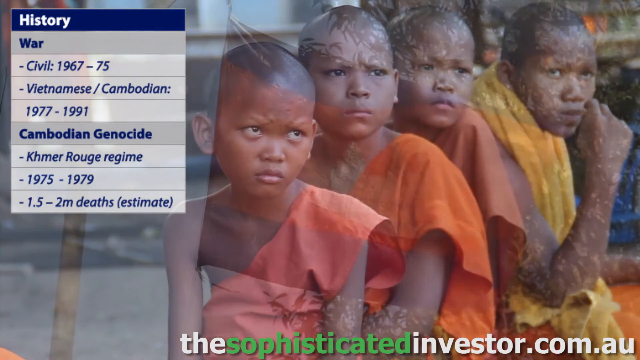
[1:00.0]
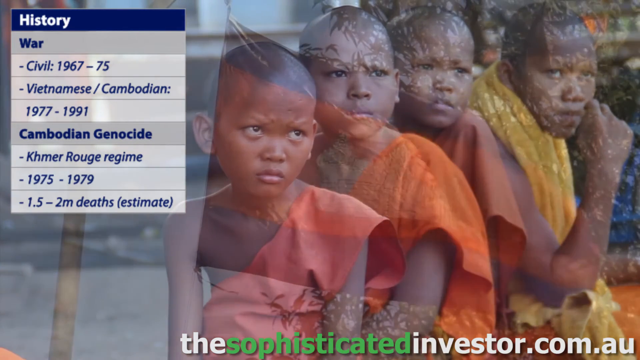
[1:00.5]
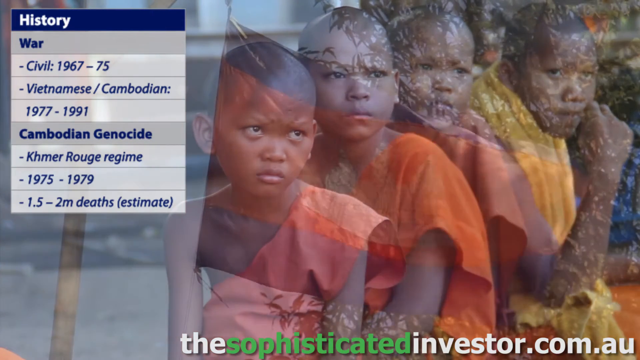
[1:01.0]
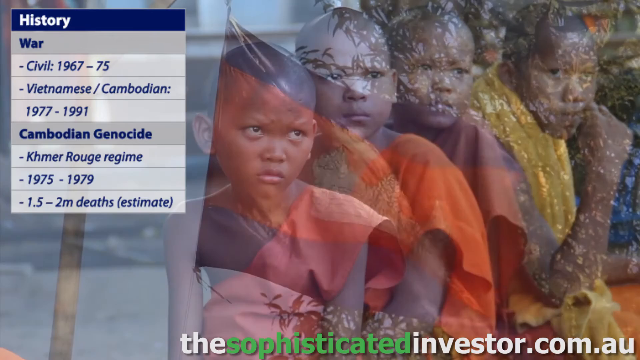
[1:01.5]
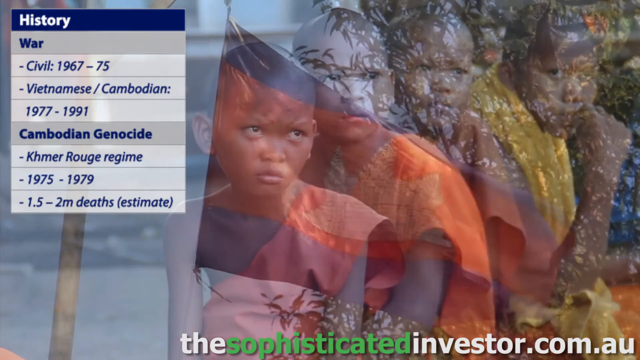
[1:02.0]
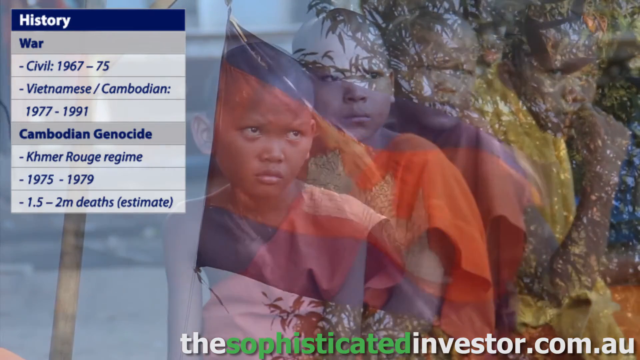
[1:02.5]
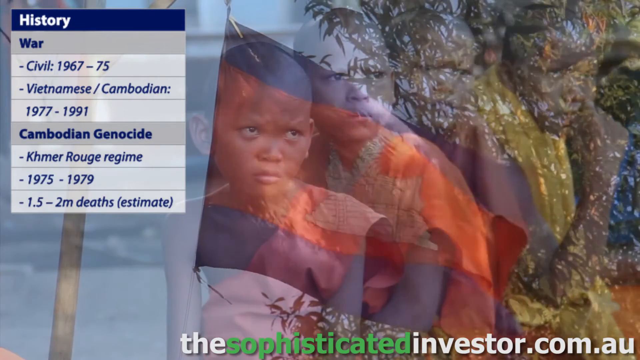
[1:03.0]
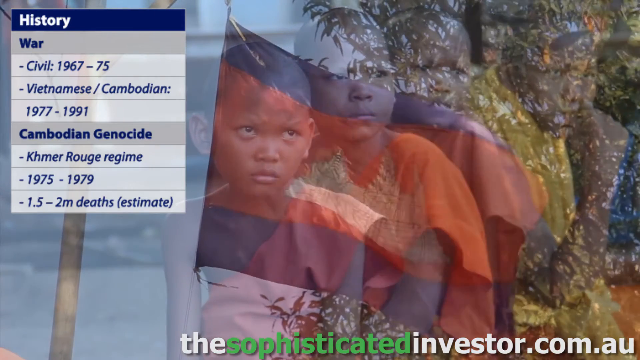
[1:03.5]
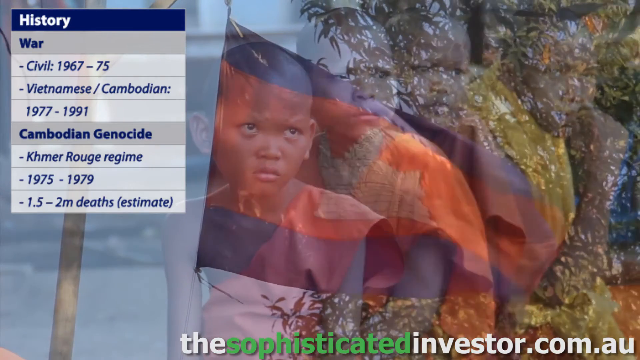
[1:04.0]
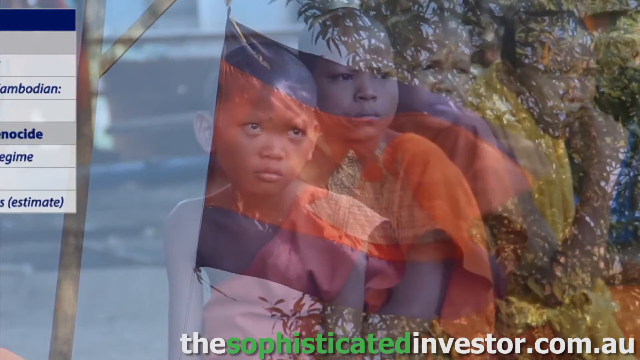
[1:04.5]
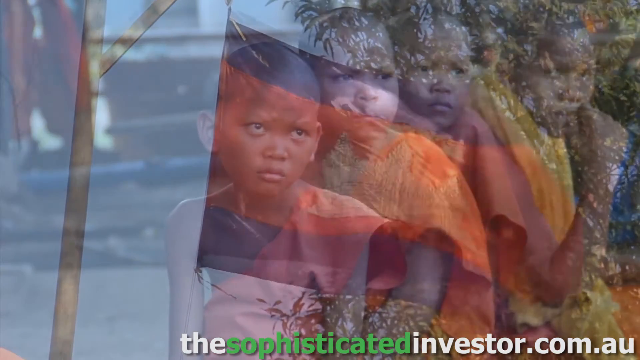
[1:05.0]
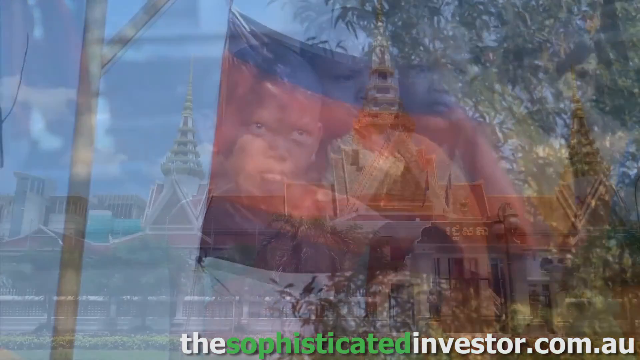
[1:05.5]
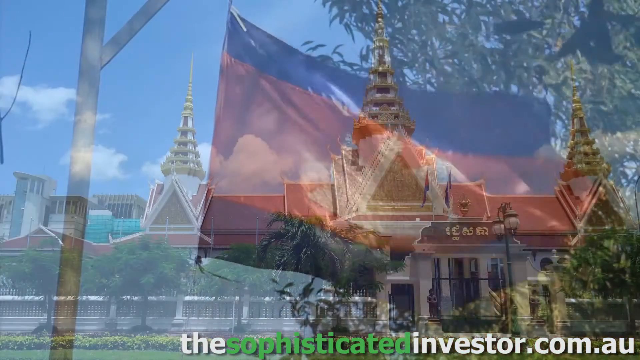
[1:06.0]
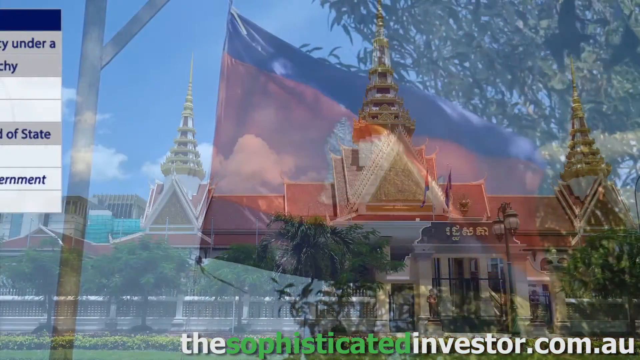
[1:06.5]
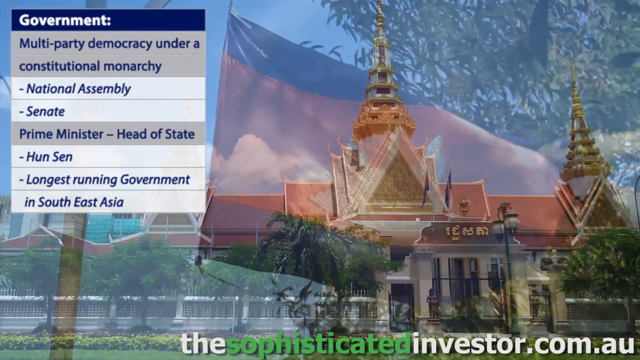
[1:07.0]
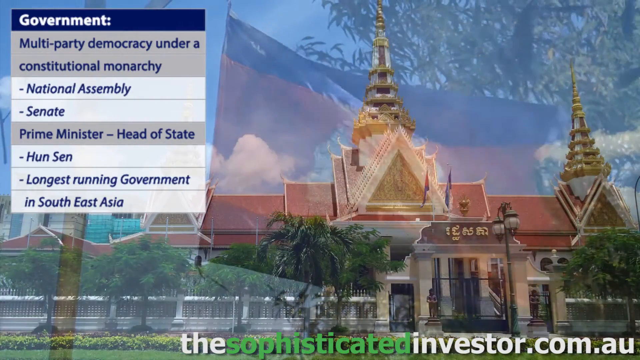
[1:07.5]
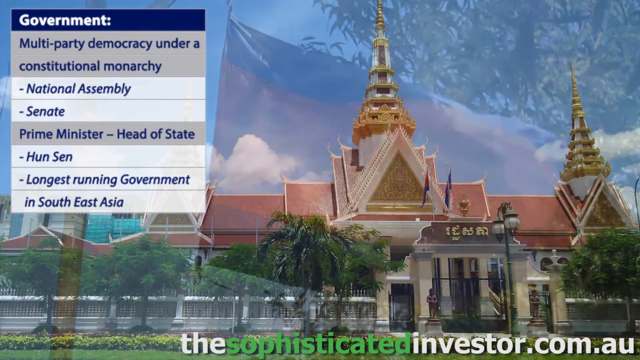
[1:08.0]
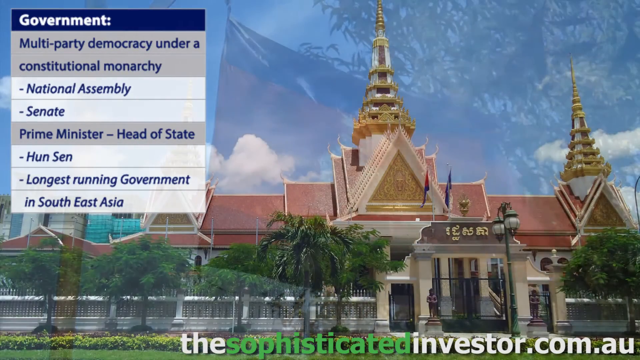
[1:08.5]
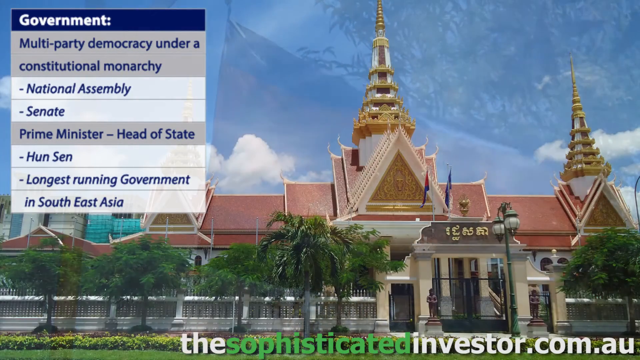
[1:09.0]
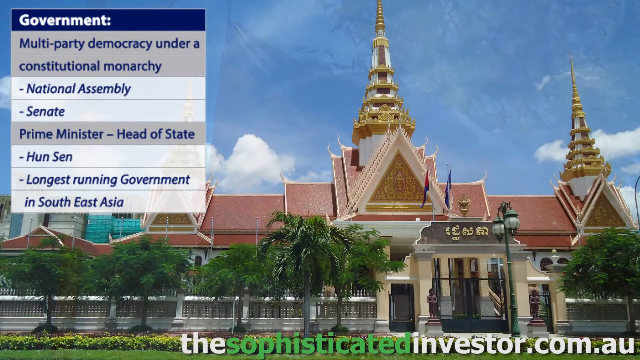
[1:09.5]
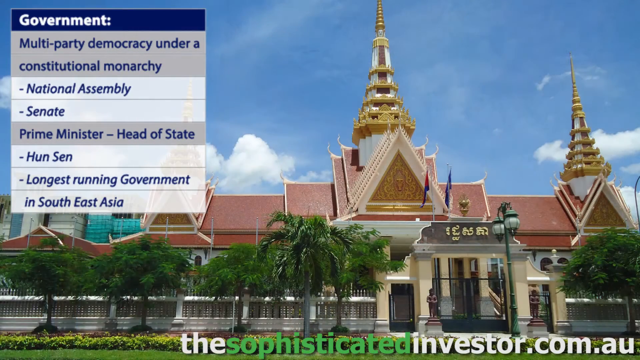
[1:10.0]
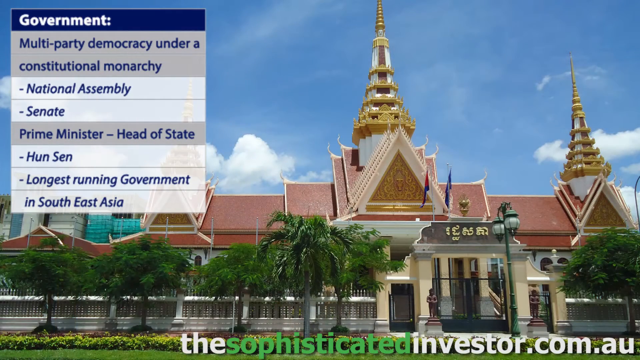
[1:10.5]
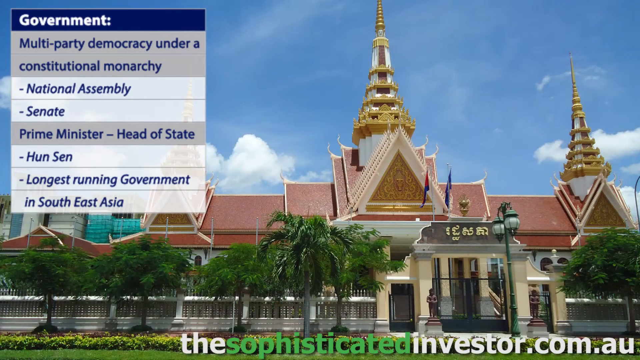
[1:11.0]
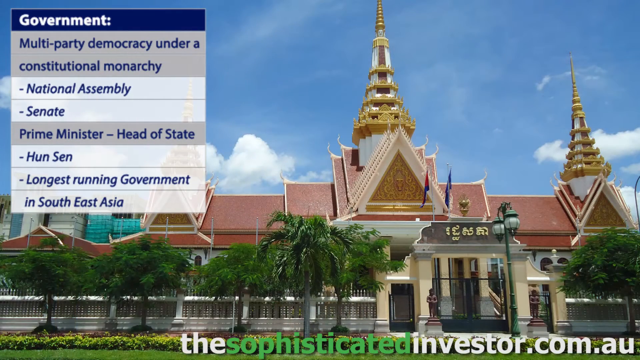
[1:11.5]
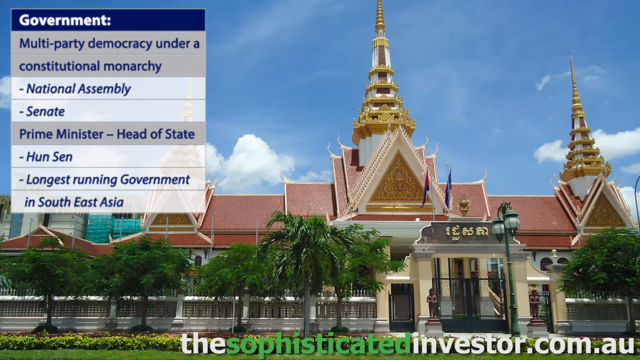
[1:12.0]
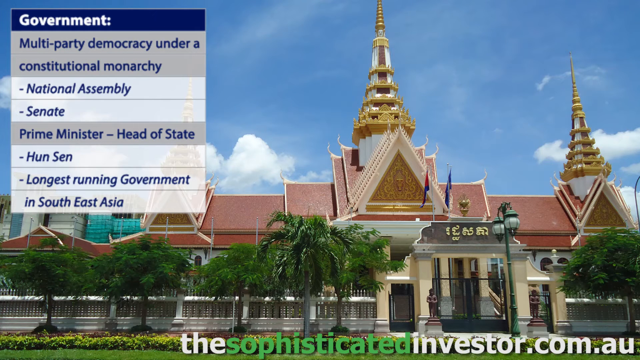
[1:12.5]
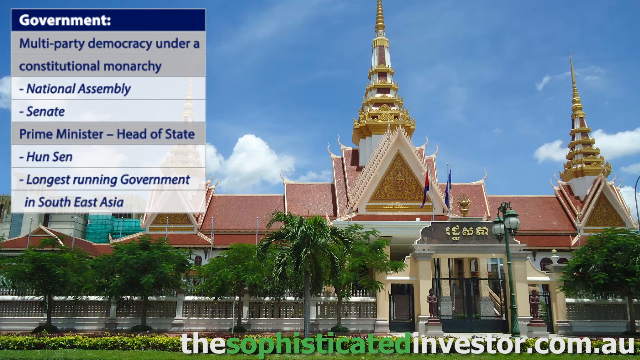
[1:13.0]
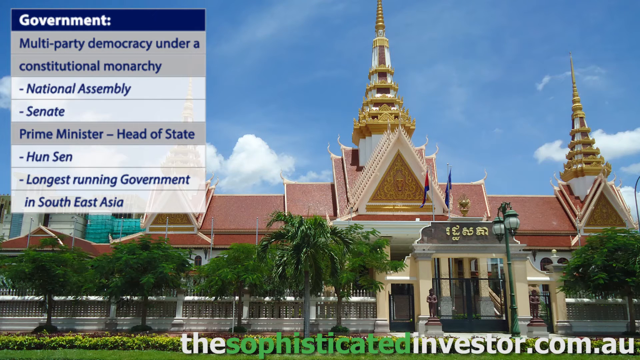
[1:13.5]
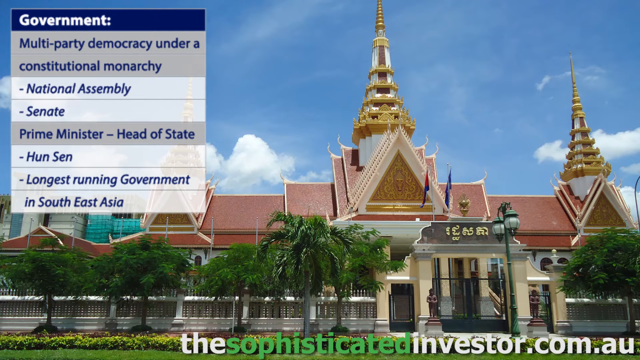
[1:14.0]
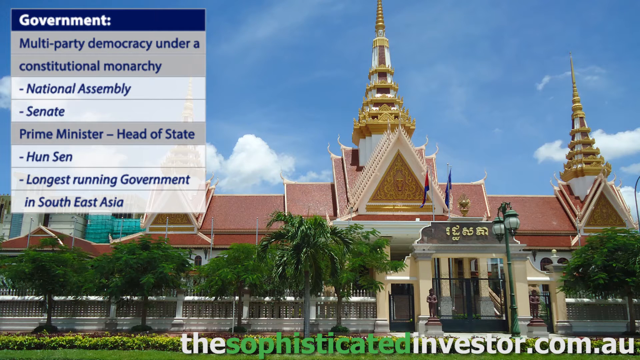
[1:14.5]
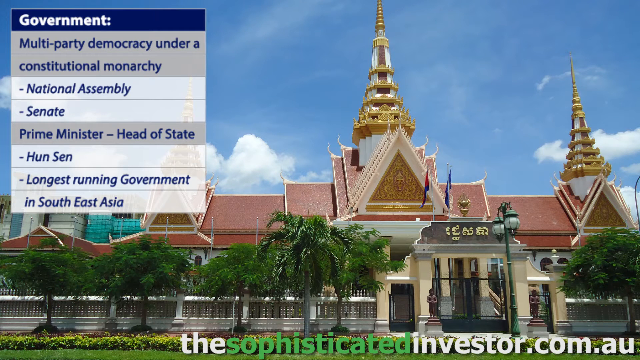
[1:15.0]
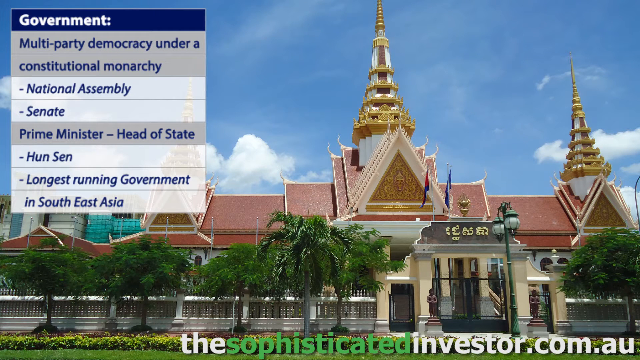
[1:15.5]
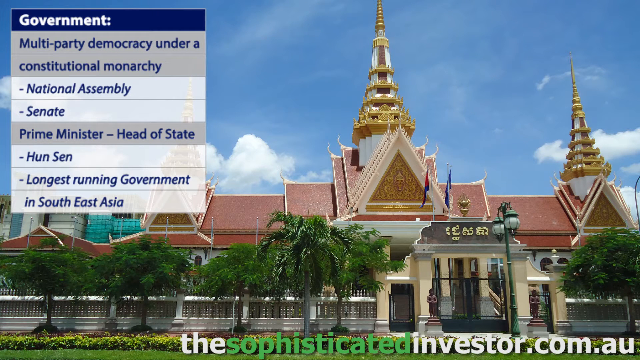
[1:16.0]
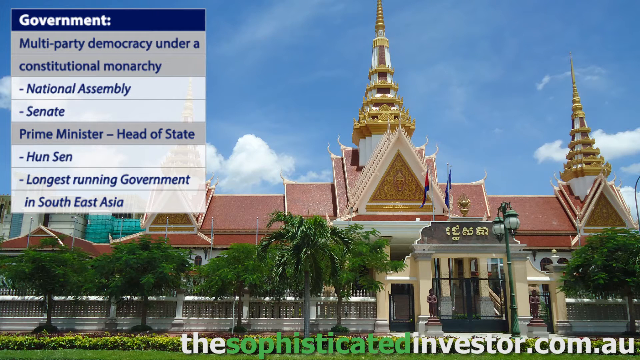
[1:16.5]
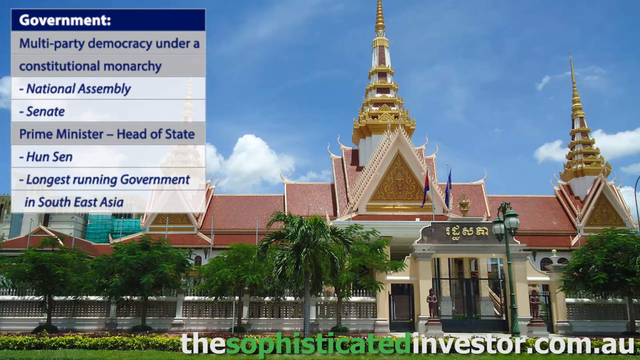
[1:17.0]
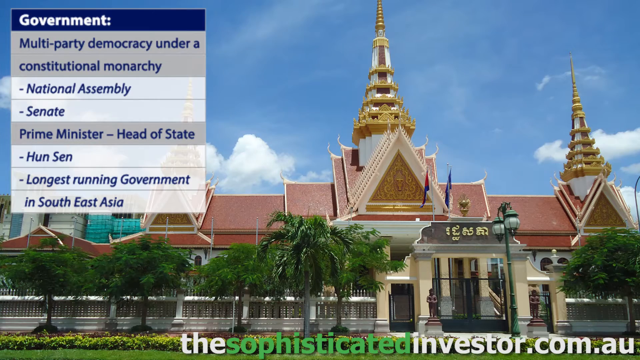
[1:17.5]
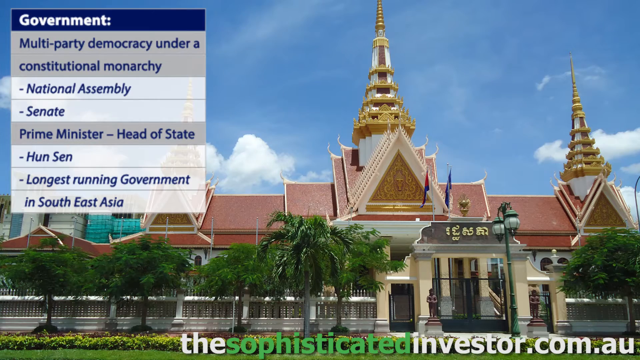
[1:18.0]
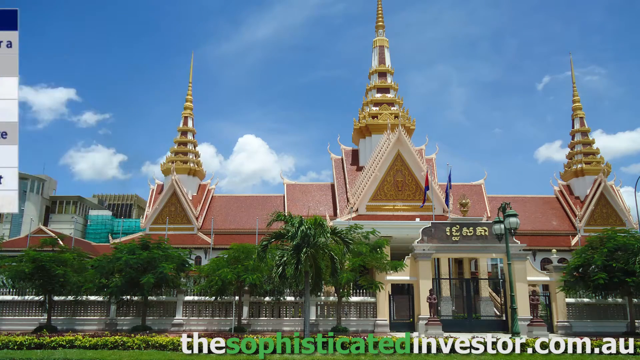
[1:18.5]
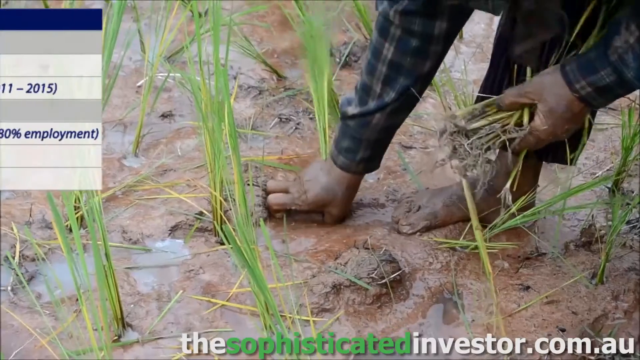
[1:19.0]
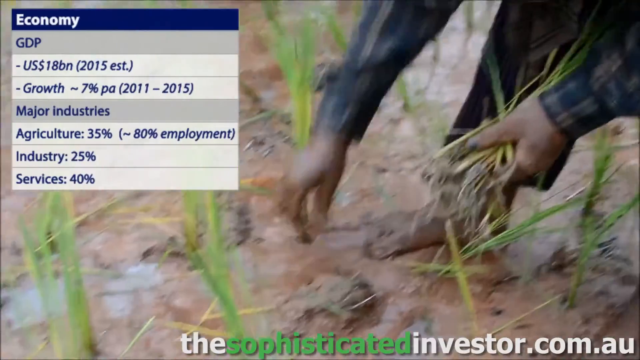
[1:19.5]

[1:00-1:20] Four children, who appear to have darker brown skin and are possibly Indian, sit one in front of another. The first is in the upper right, and each child is placed a little to the left and in front of the other, so their left shoulders are all visible as they roughly face the camera. Each wears different attire: the front one seems to have a pinky peach sash over his left shoulder, draping toward his right side near his hip; the next is orange, then pinky peach again, then yellow. The video fades into a flag blowing in the wind, with blue stripes on the top and bottom, a red one in the middle, and a crown in the center. It fades again to a building a few stories tall and very wide, with its left and right ends out of view. Two gold towers peek up, one in the center and one on the right-hand side, and there are a bunch of trees in front of it. A gray, white and blue banner is overlaid in the upper left containing the words "government, multi-party, democracy under constitutional monarchy, National Assembly, Senate, Prime Minister, Head of State, Hun Sen, longest running government in Southeast Asia". The video then cuts sharply to a couple of hands in the upper right working vigorously in muddy soil on the ground, with a few pieces of vegetation peeking out around it. The person seems to wear long-sleeved clothing, with sleeves that are blue in general and plaid.